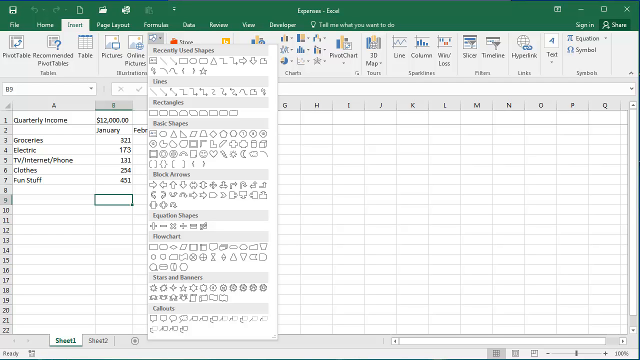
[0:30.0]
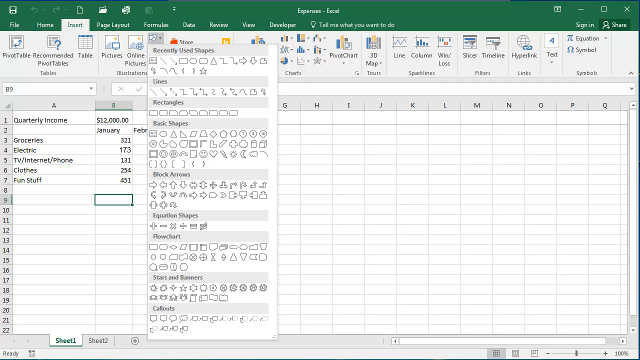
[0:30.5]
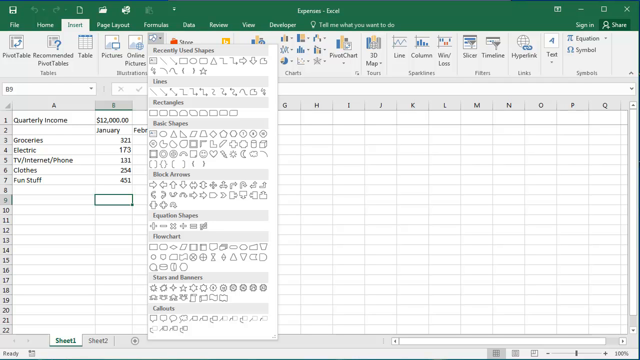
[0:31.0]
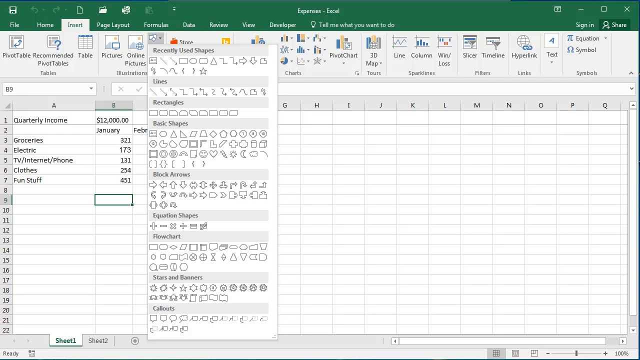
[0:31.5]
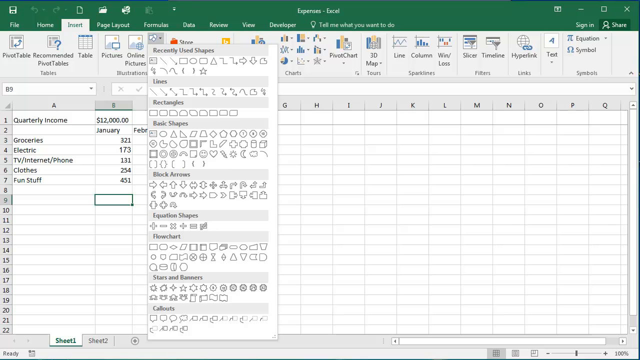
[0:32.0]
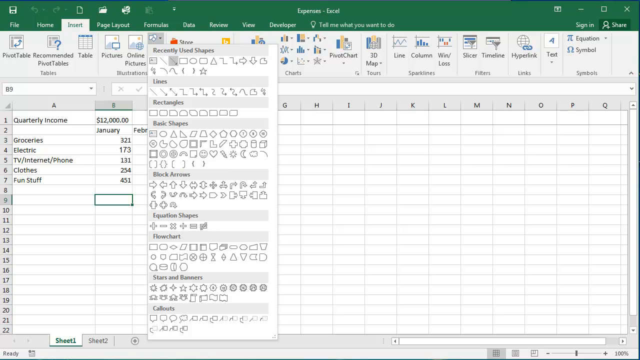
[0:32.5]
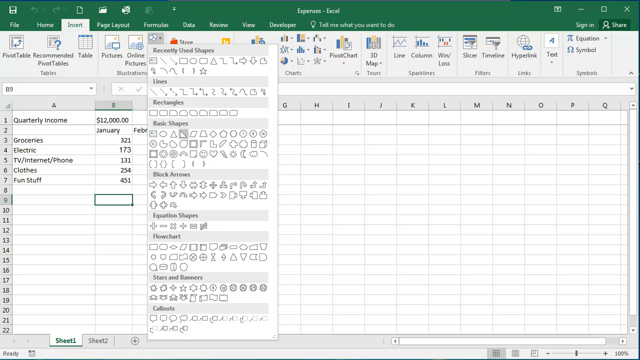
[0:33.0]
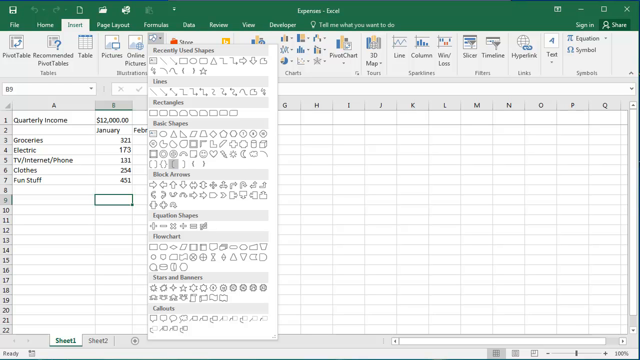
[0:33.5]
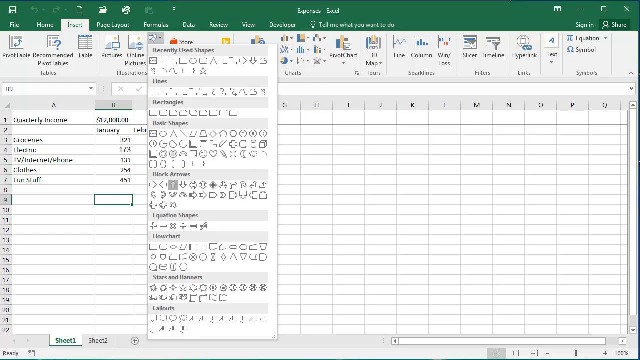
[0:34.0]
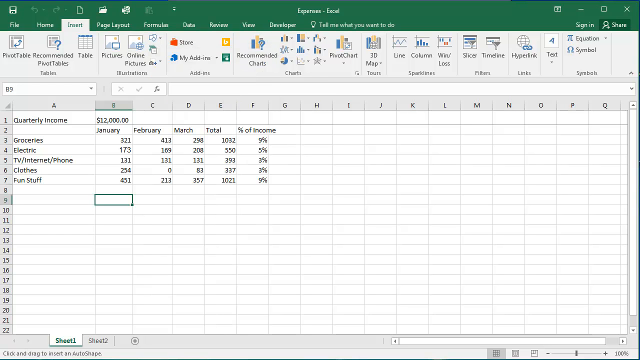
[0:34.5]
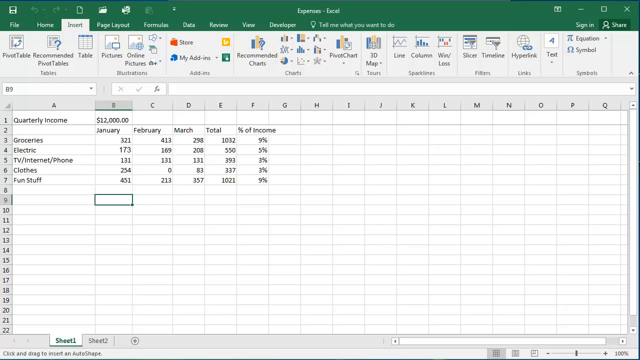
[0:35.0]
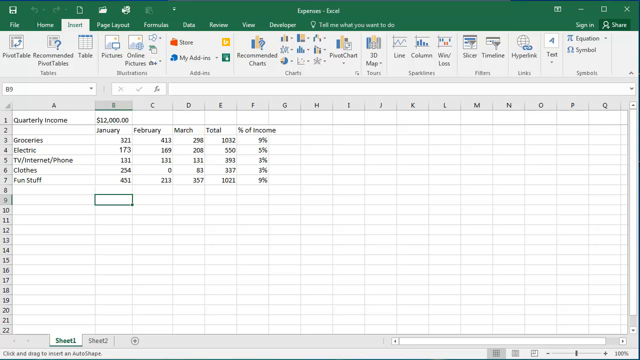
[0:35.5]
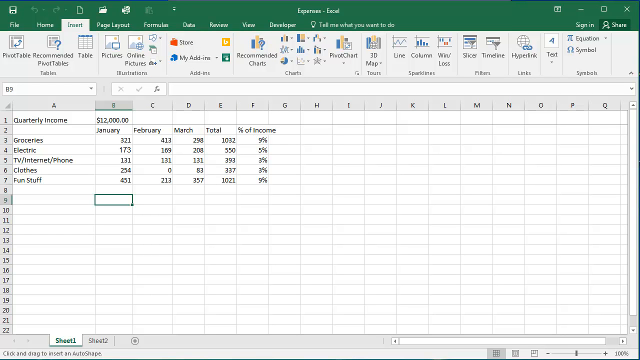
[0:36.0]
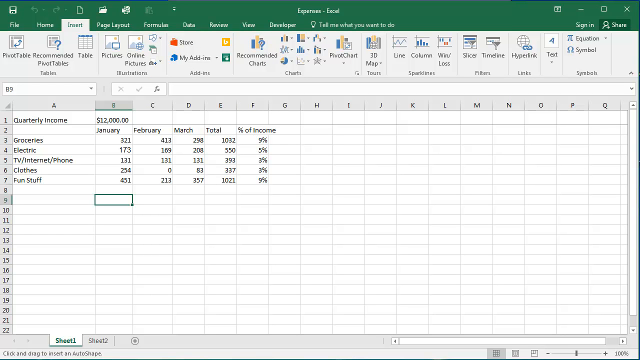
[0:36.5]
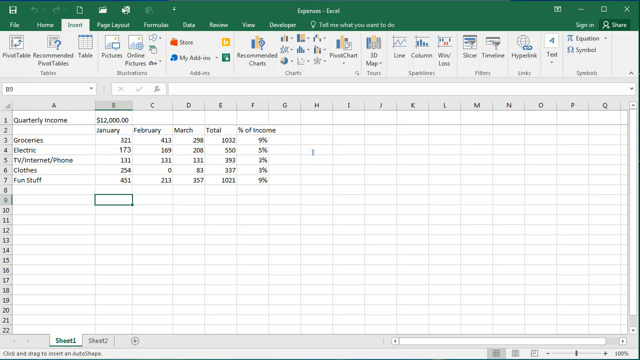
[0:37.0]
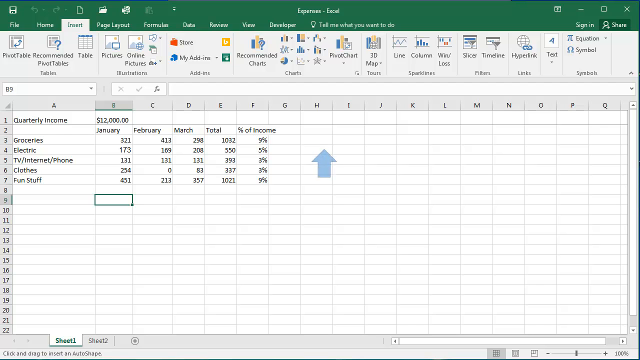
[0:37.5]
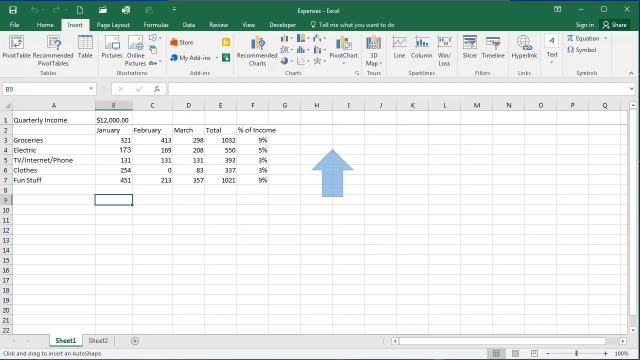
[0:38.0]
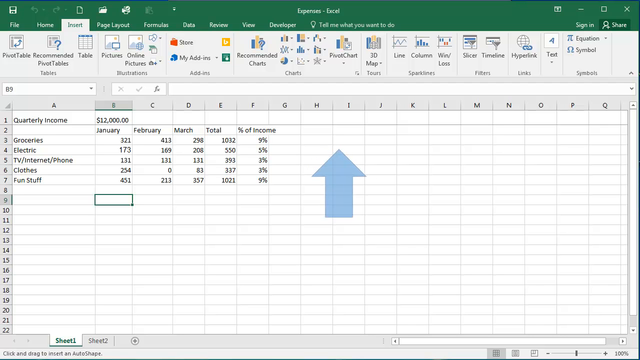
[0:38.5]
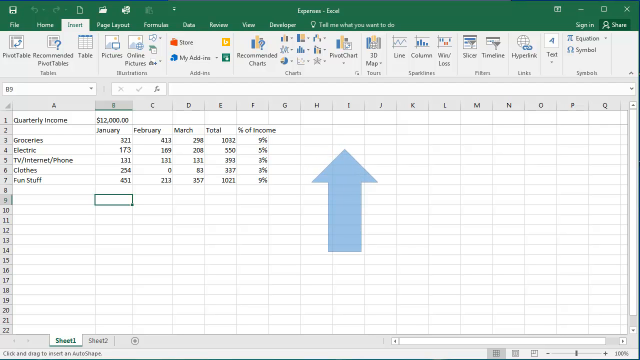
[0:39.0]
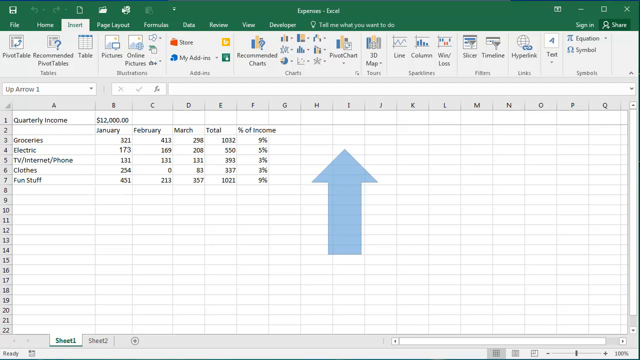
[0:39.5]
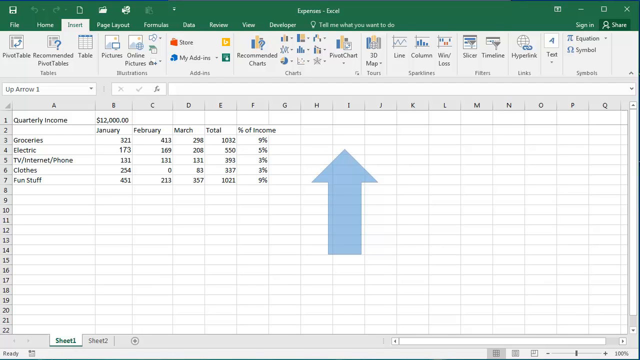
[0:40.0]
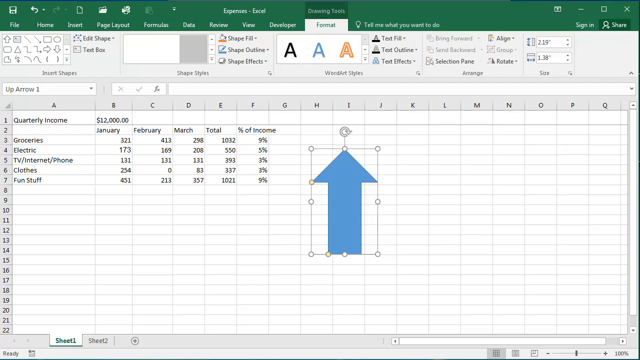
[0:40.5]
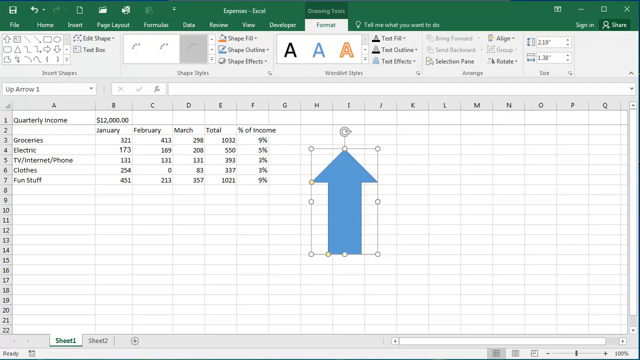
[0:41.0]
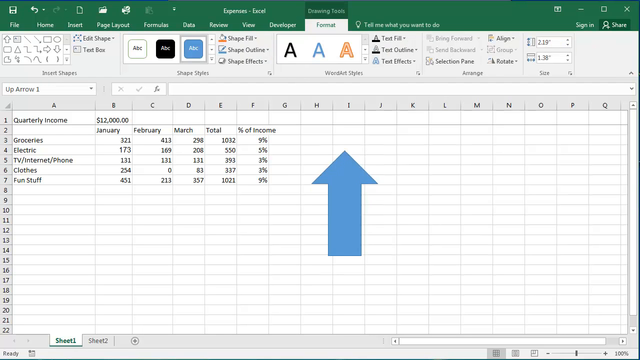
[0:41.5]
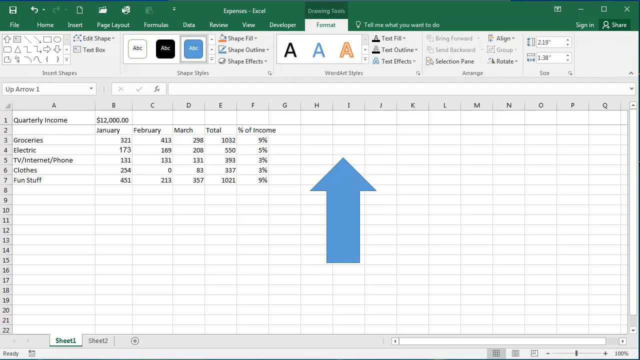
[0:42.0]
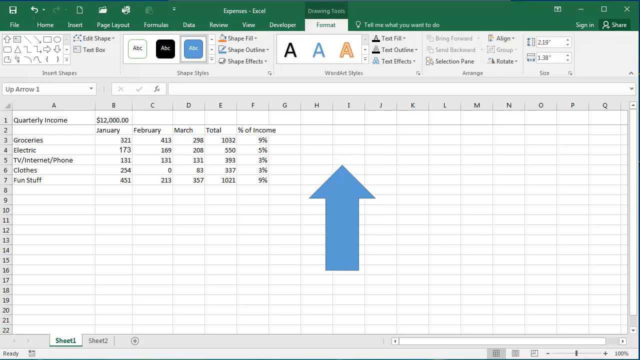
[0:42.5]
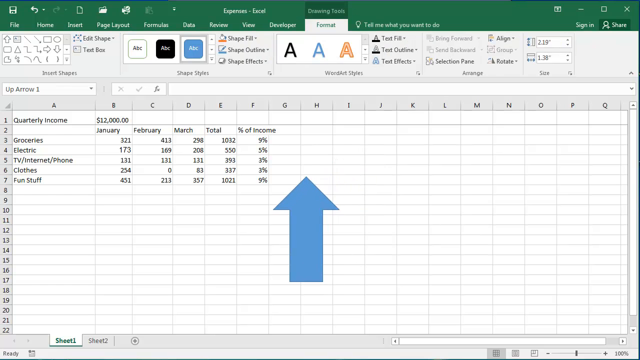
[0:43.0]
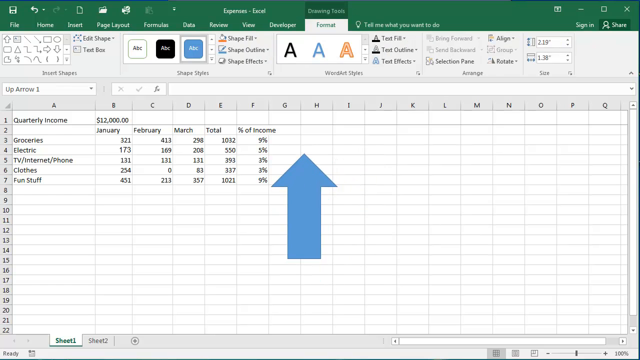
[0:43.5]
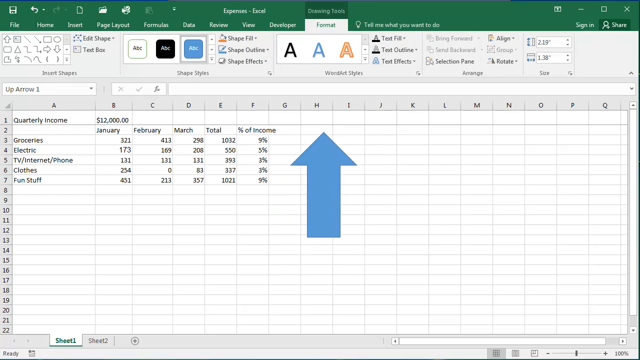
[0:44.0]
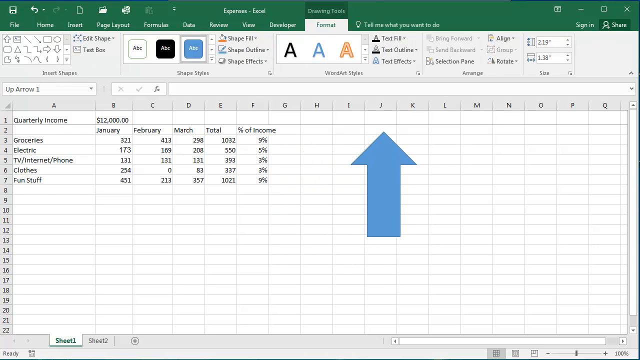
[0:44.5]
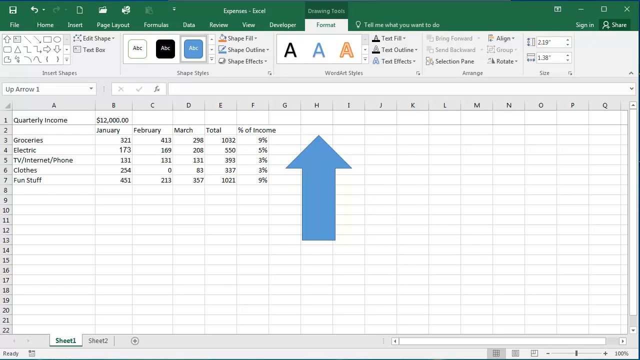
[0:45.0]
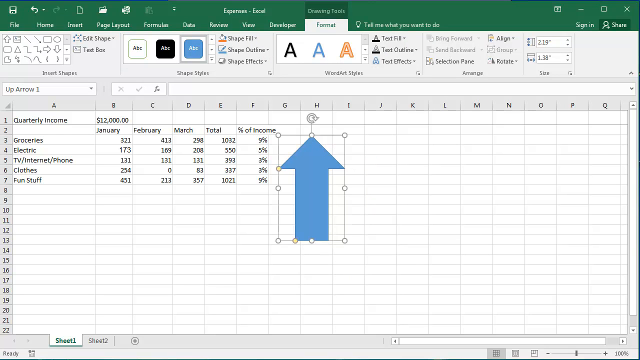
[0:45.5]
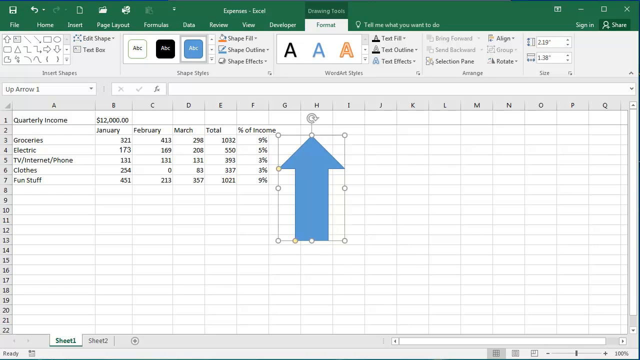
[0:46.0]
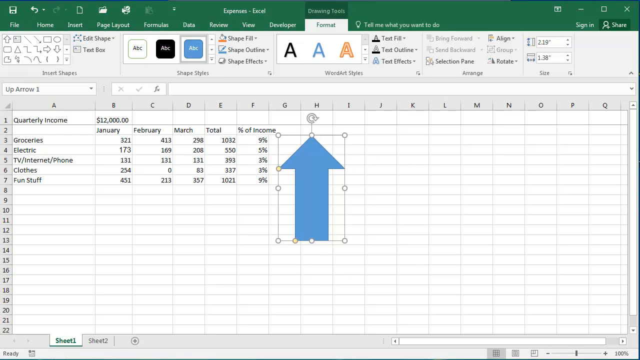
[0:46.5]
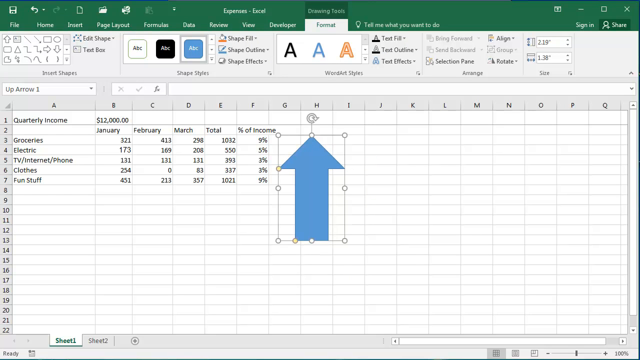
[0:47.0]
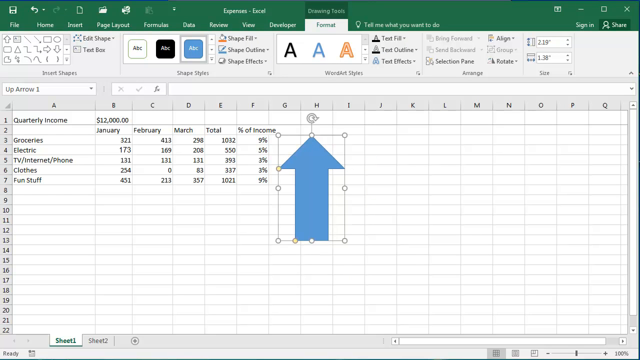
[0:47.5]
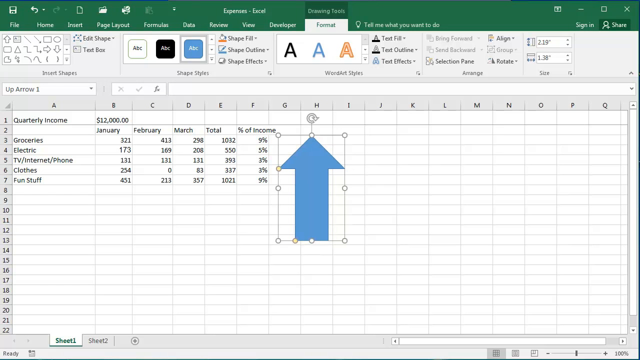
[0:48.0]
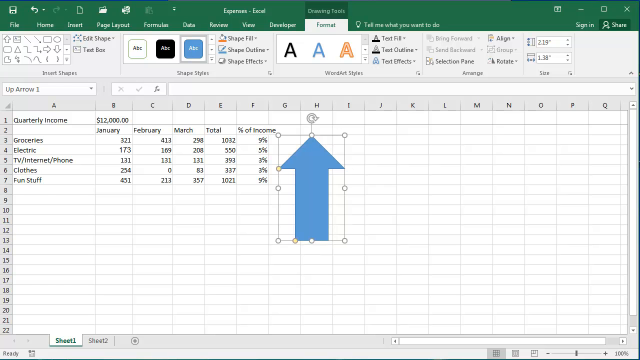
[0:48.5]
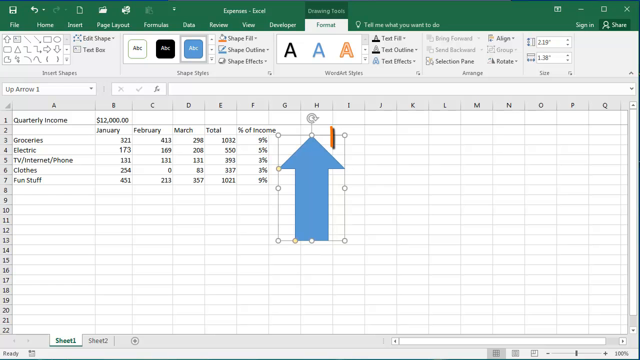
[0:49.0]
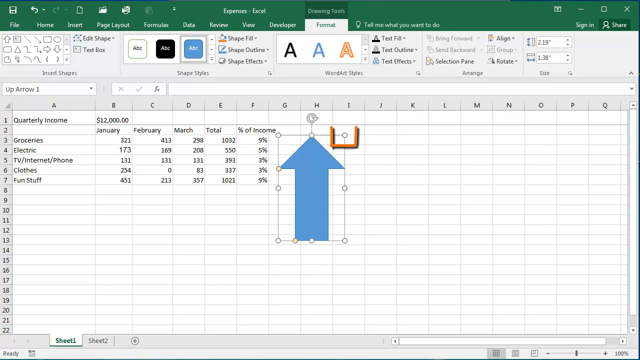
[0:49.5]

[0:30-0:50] The Excel spreadsheet has a green bar across the top with menu items listed along it. The Insert tab is highlighted, and a drop-down menu of shapes is on the screen: a large rectangle in the center holds lots of different shapes. At its top it says "recently used shapes," followed by "lines," "rectangles," "basic shapes," "block arrows," "equation shapes," "flowchart," "stars" and "banners," each category with many shape options. In the spreadsheet itself, column A has "quarterly income" next to row 1, "groceries" next to row 3, "electric" in row 4, "TV, internet, and phone" in row 5, "clothes" in row 6 and "fun stuff" in row 7. Column E shows $12,000 for row 1, "January" for row 2, $173 for row 4, $131 for row 5, $254 for row 6 and $451 for row 7. The screen stays like this, then a mouse cursor goes down to block arrows and chooses one of them. A gigantic blue arrow appears on the screen inside columns H and I and keeps getting bigger and bigger. A transformation icon appears around the arrow, and at the top under formula three blocks that say "ABC" appear in different colors. The blue arrow moves left and right on the spreadsheet and settles in next to columns H, G and I, and a red rectangle appears in column I next to the blue arrow.